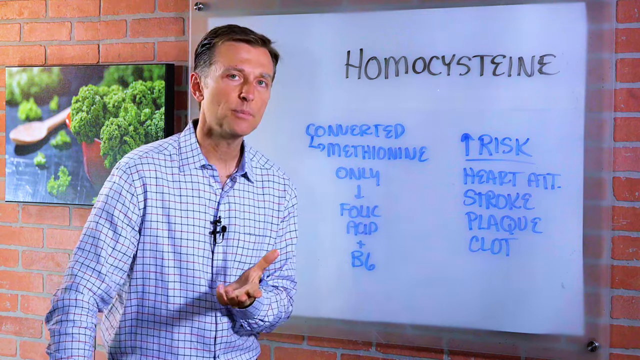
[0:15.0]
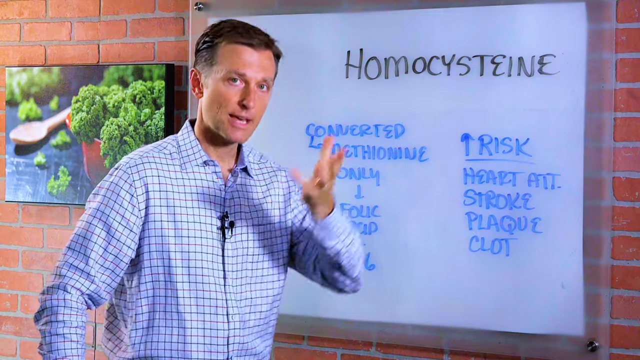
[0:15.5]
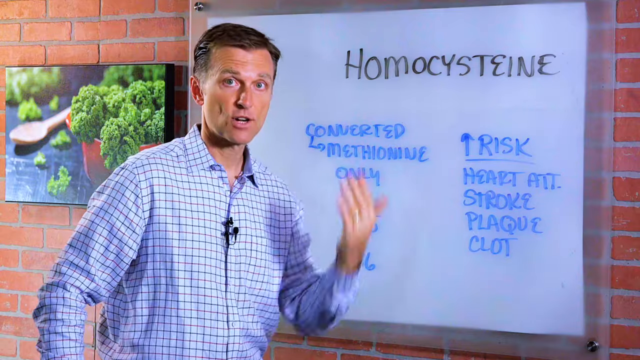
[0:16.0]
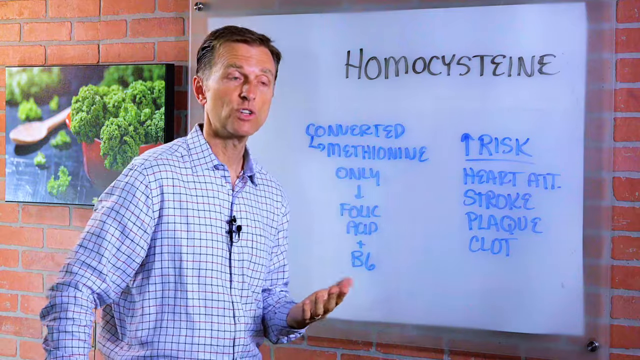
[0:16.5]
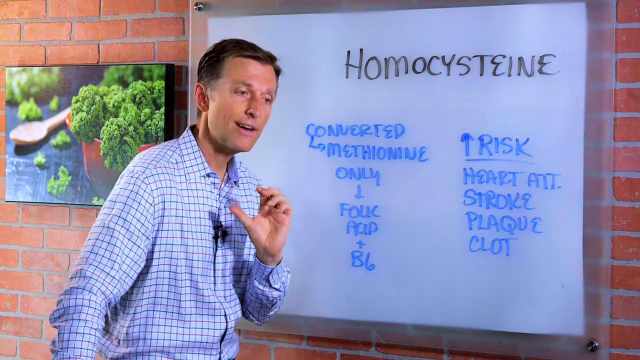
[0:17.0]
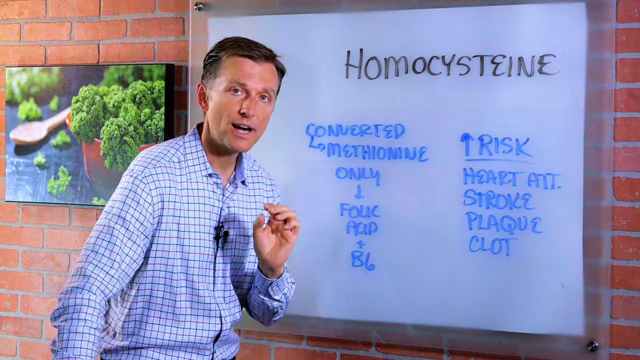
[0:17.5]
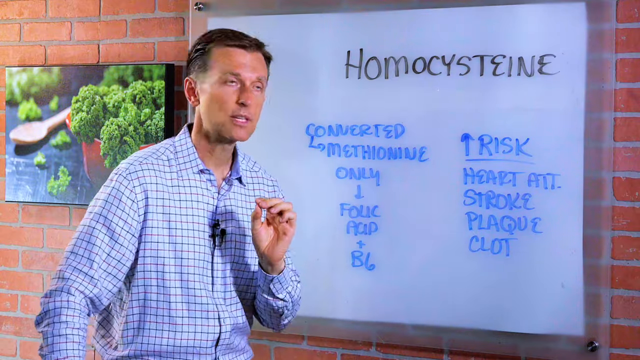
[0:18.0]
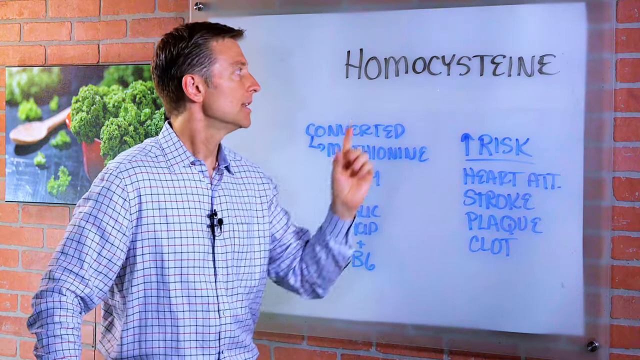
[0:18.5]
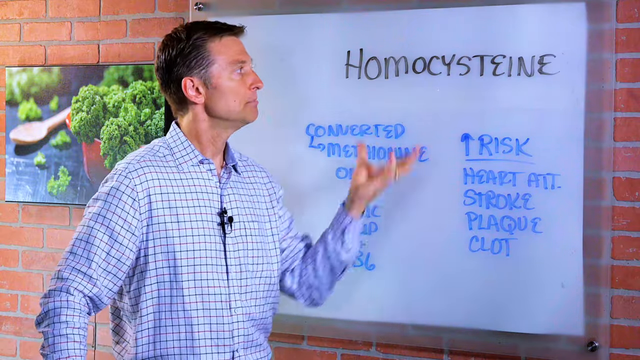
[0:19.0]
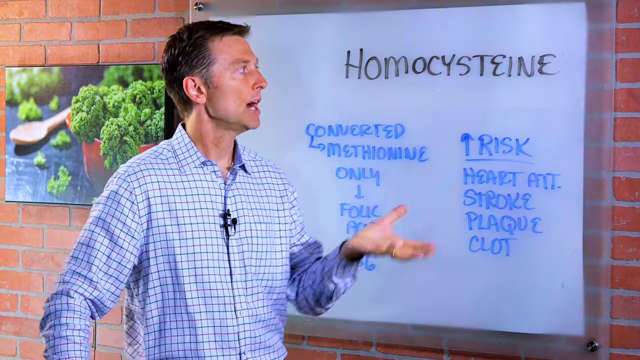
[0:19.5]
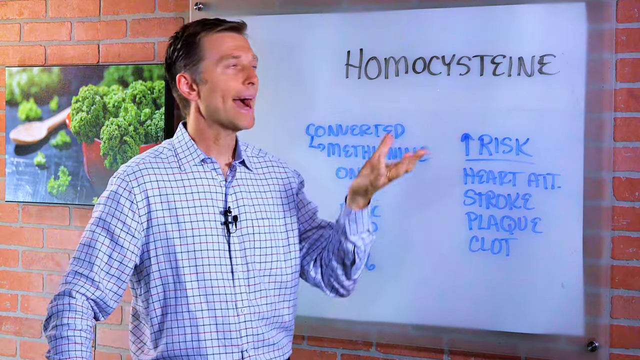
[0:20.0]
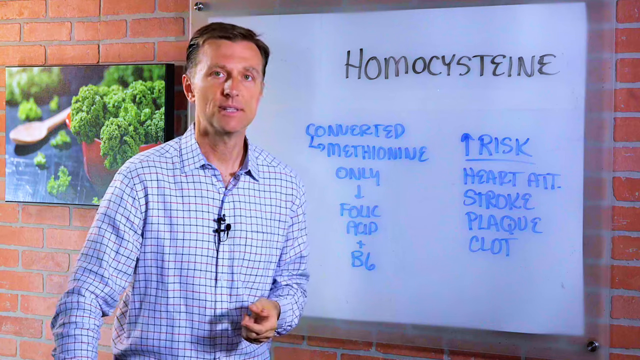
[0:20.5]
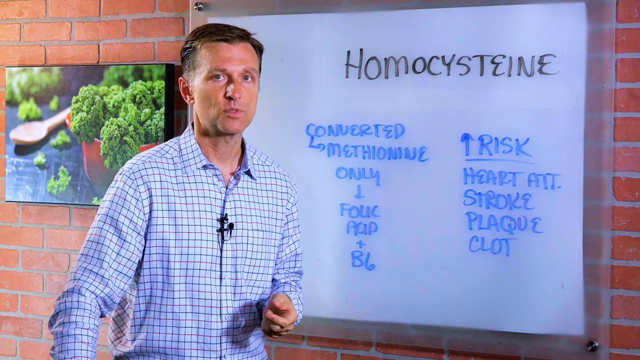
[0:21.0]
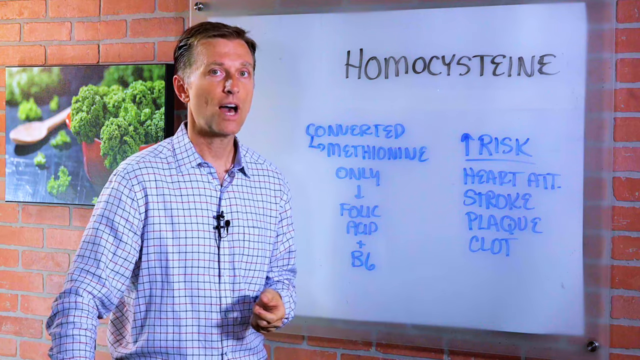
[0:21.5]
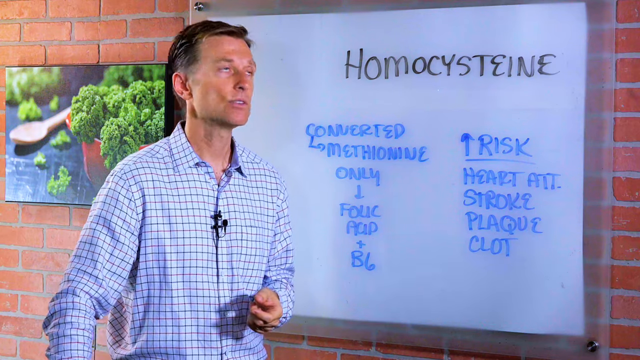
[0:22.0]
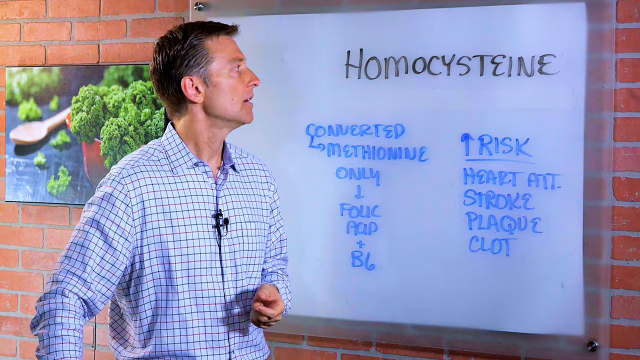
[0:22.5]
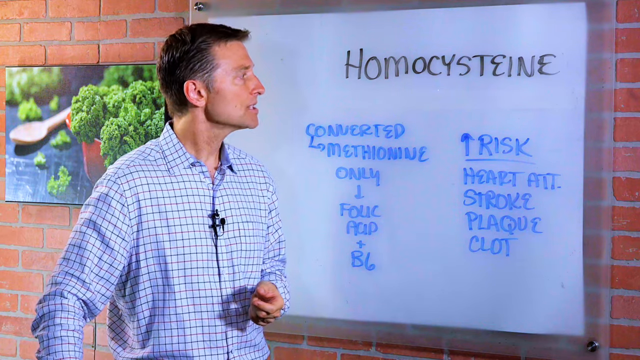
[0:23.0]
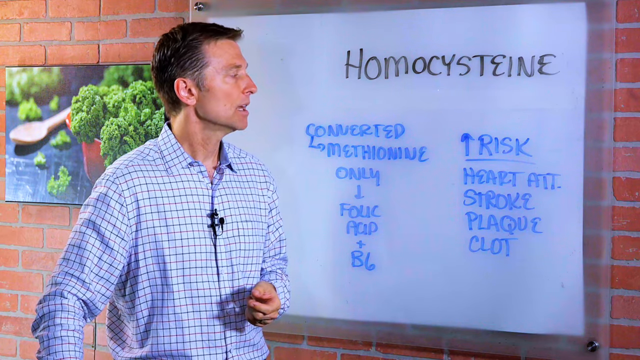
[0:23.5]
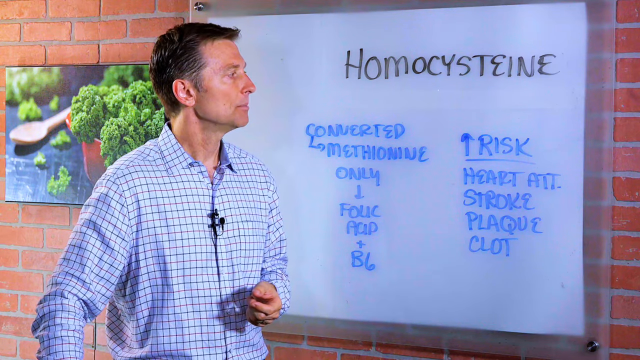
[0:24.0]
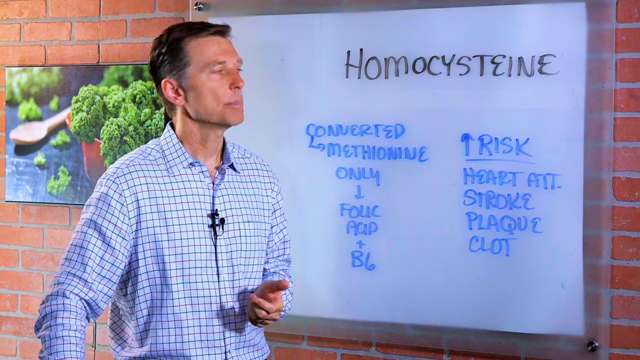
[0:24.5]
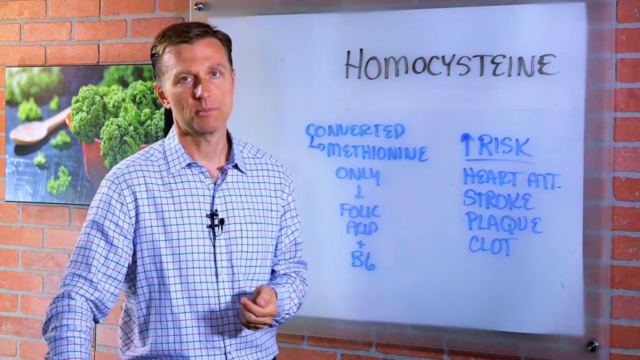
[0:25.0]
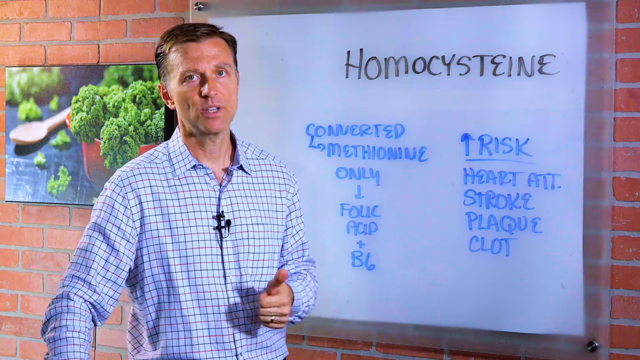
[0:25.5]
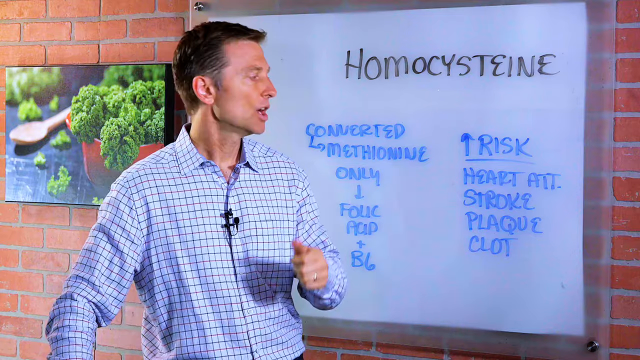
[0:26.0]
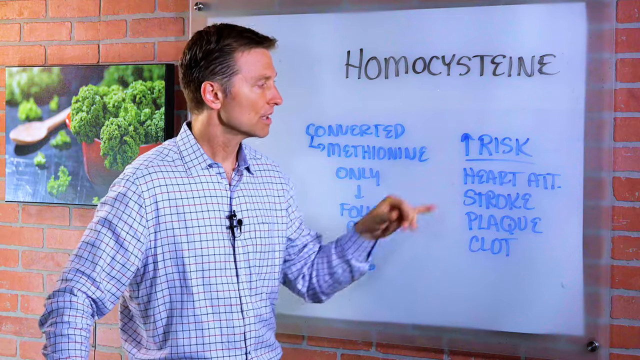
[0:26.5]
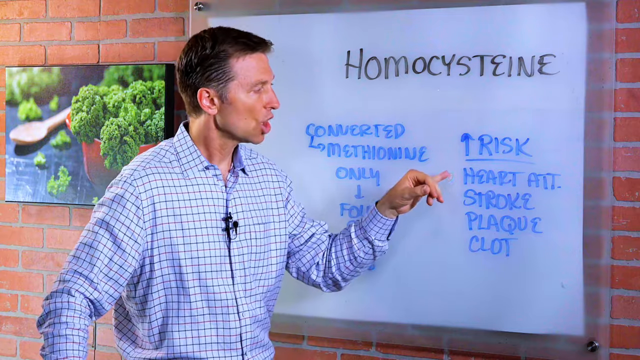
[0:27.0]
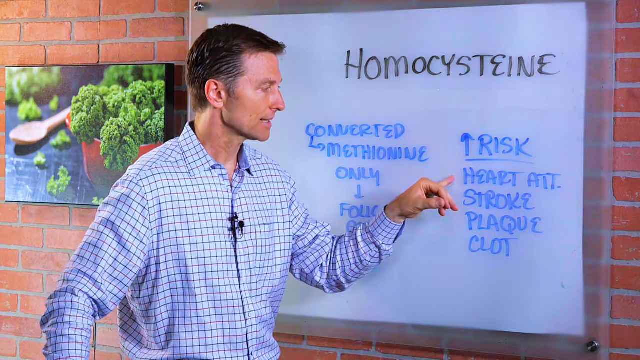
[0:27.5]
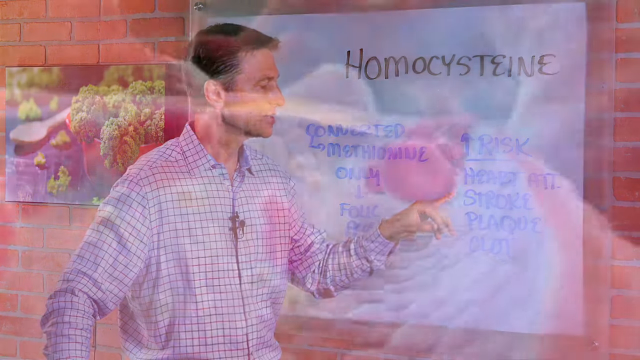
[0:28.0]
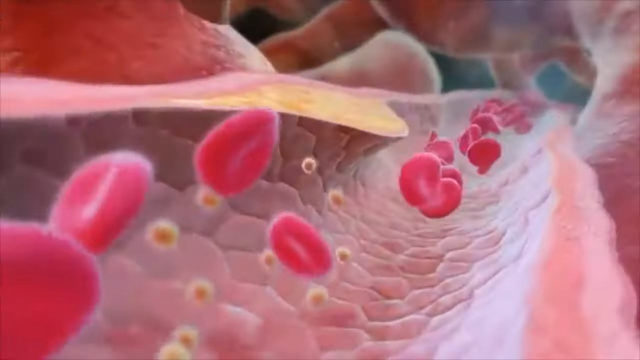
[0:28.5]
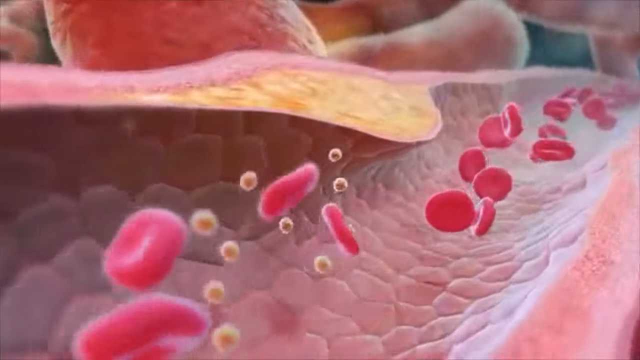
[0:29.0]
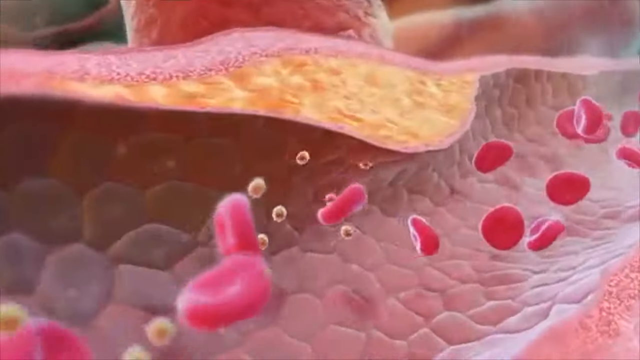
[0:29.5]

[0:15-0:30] The man, Dr. Berg, appears to continue explaining, pointing to the word "homocysteine" on the board. He then points to the term "heart attack" on the board. The video transitions to an animation of blood cells within an artery.